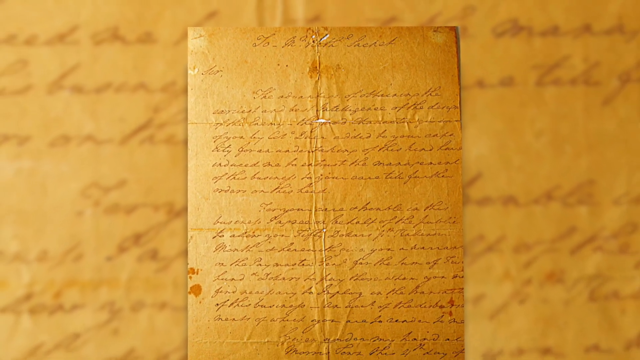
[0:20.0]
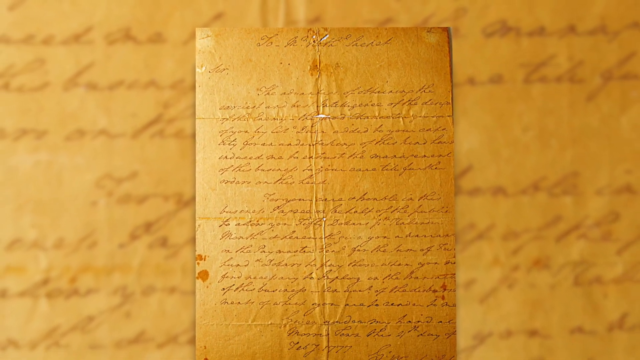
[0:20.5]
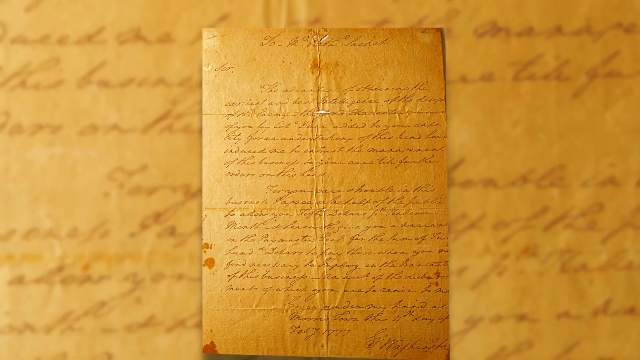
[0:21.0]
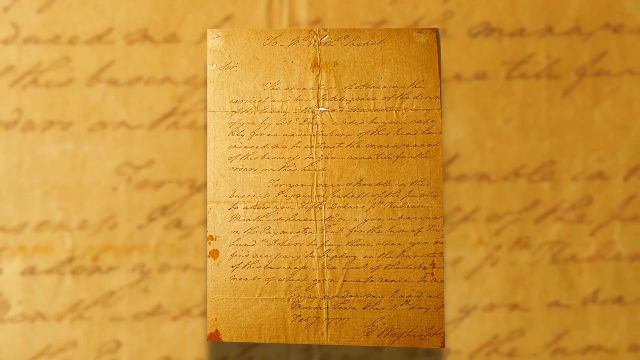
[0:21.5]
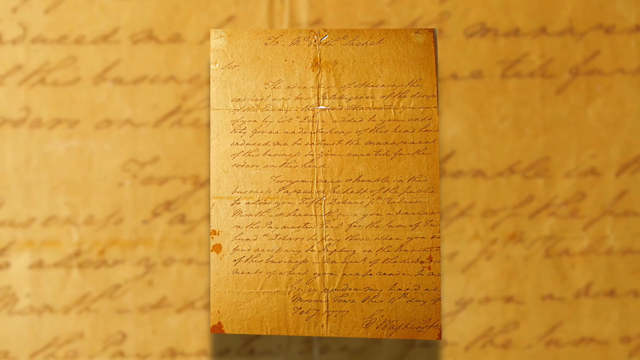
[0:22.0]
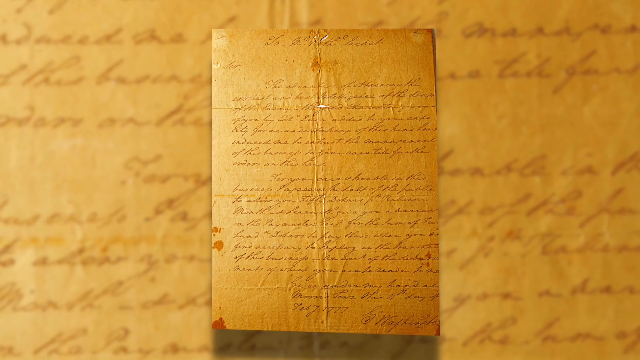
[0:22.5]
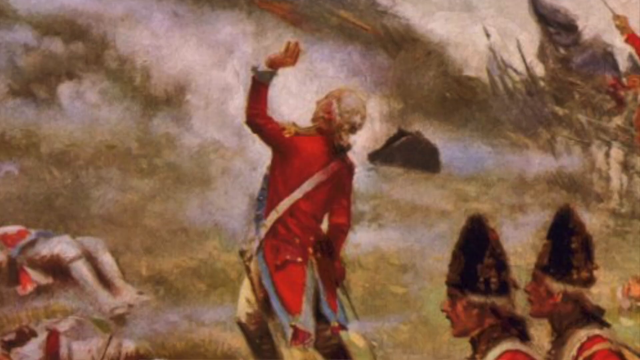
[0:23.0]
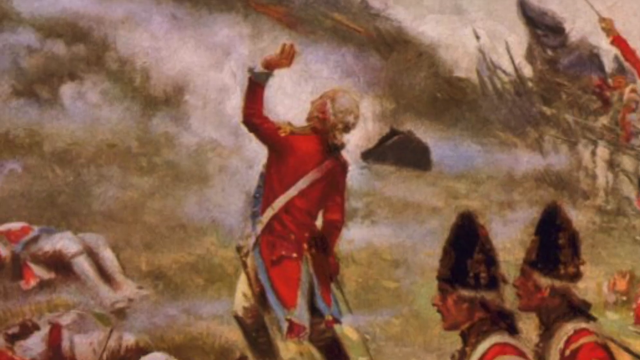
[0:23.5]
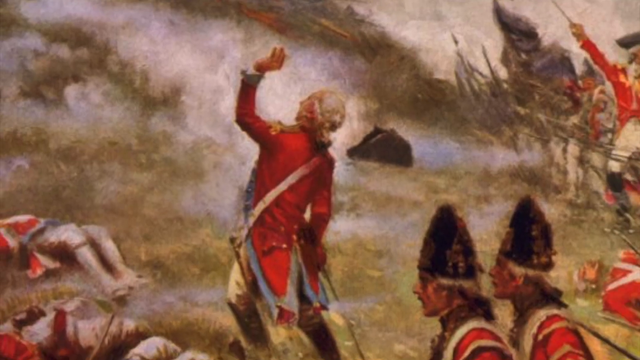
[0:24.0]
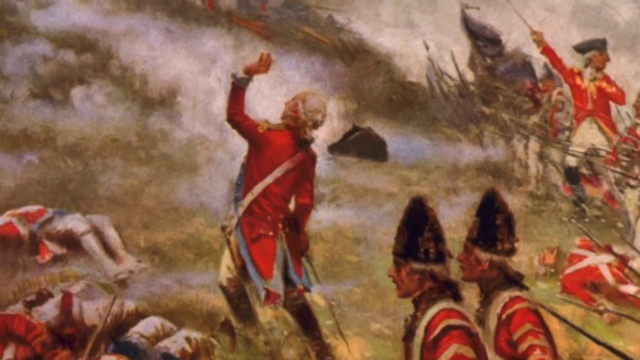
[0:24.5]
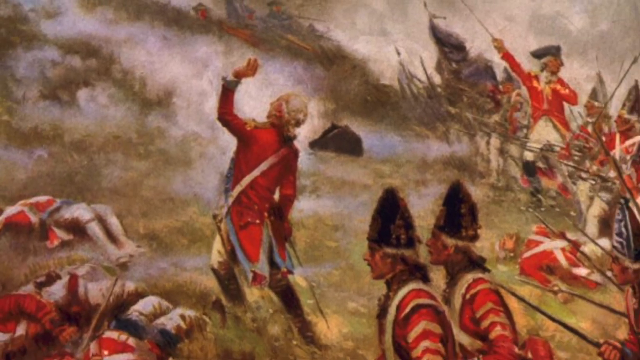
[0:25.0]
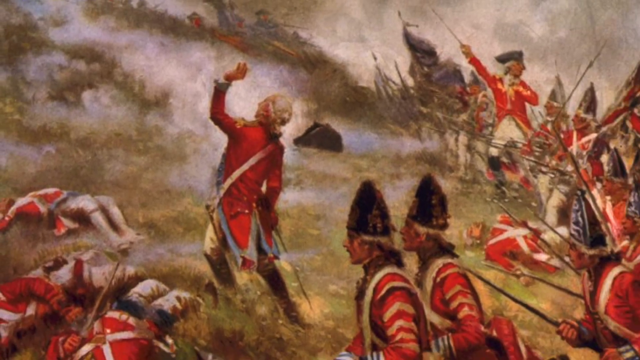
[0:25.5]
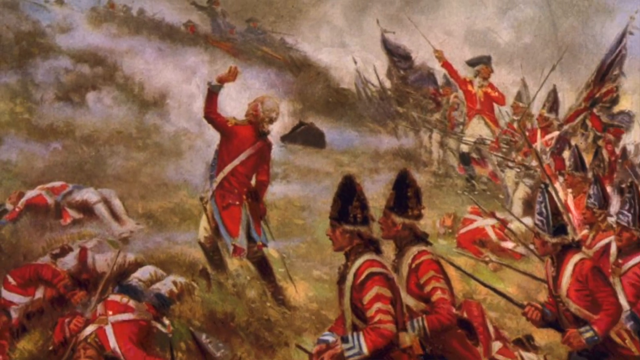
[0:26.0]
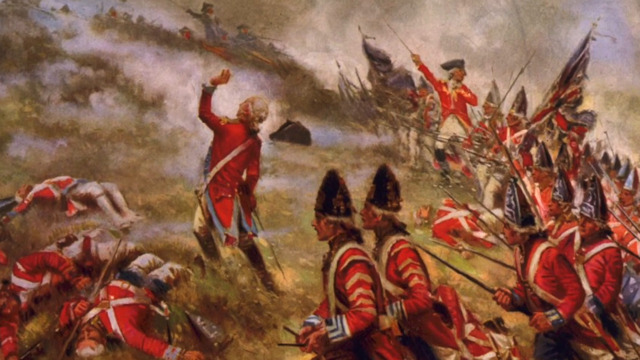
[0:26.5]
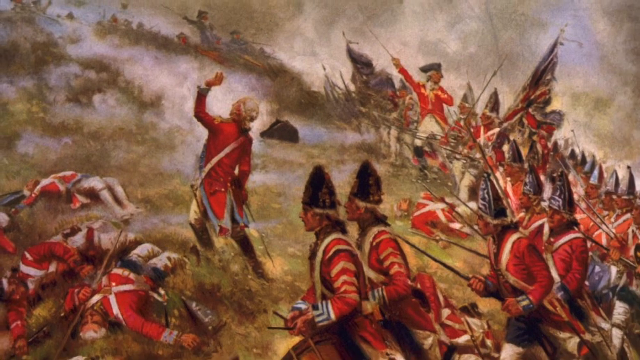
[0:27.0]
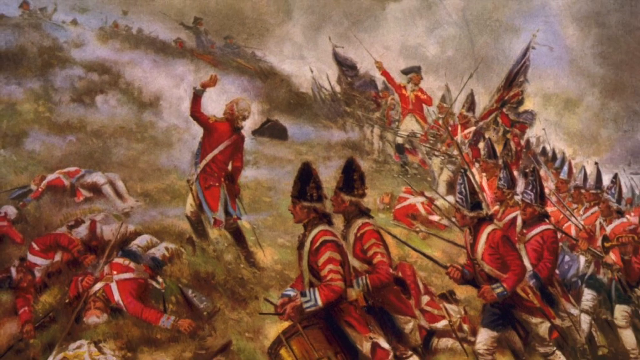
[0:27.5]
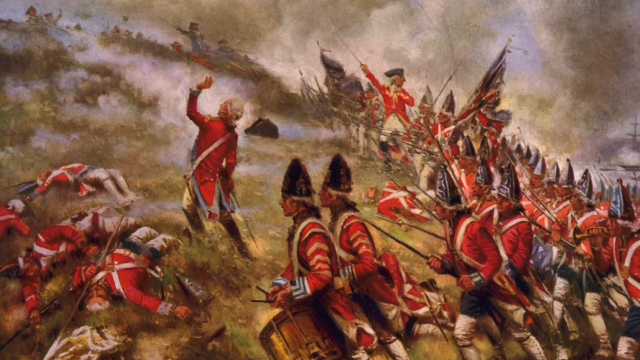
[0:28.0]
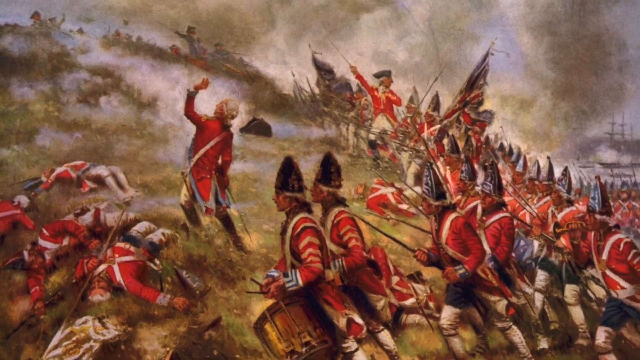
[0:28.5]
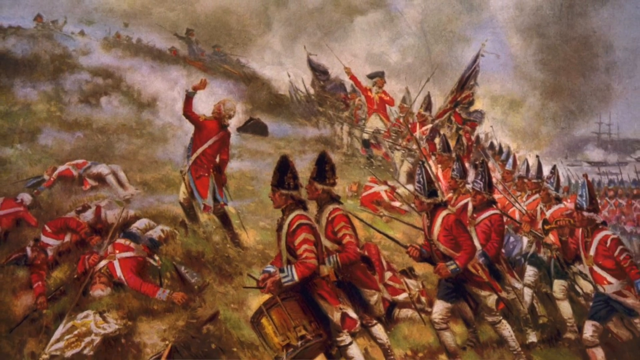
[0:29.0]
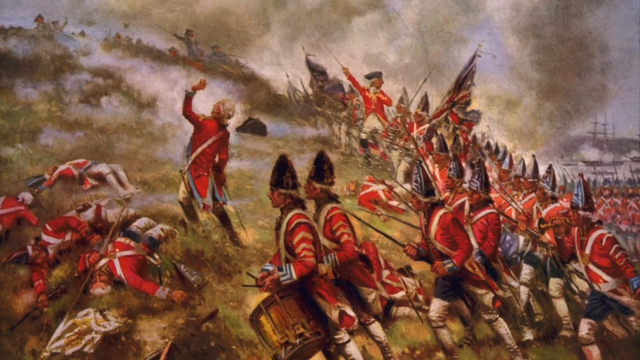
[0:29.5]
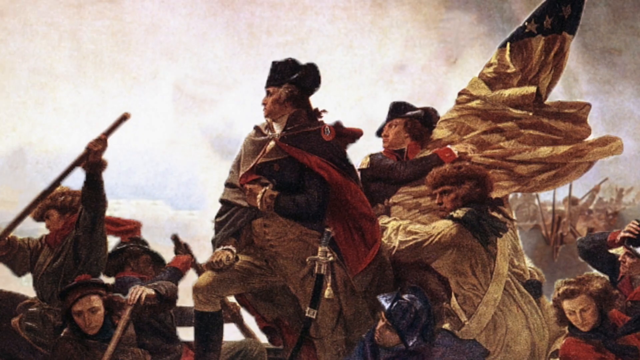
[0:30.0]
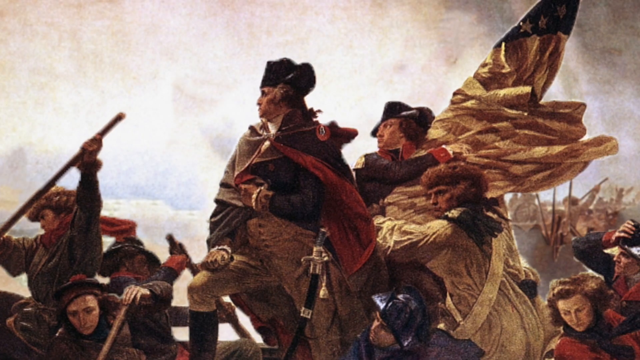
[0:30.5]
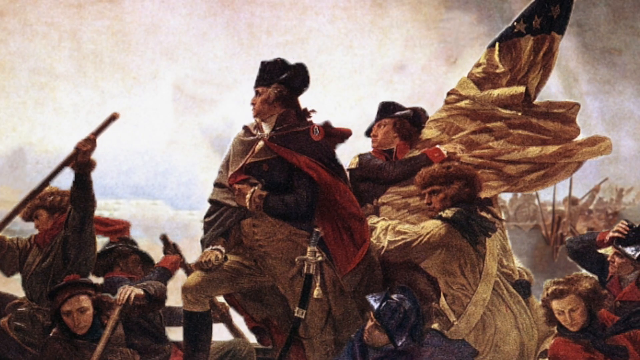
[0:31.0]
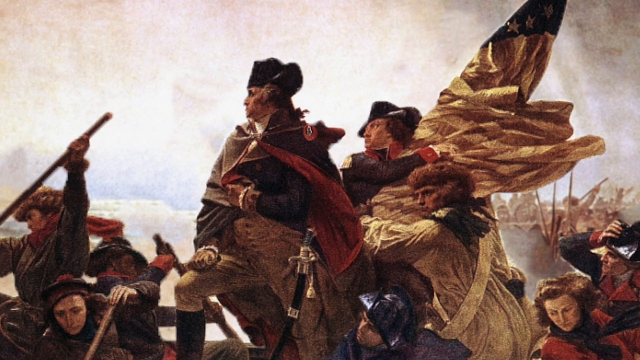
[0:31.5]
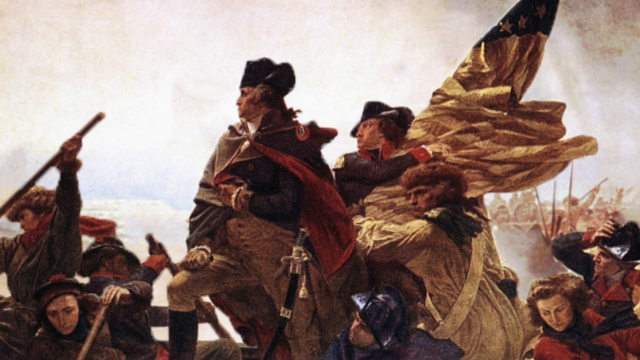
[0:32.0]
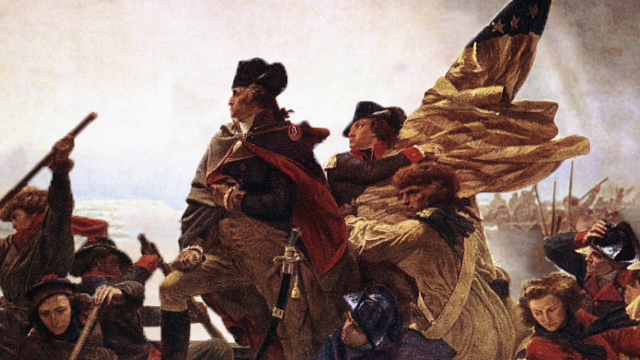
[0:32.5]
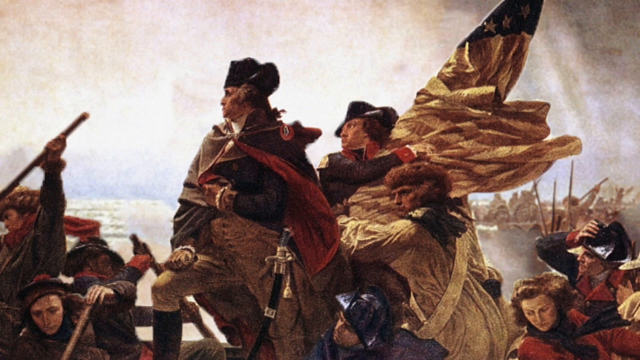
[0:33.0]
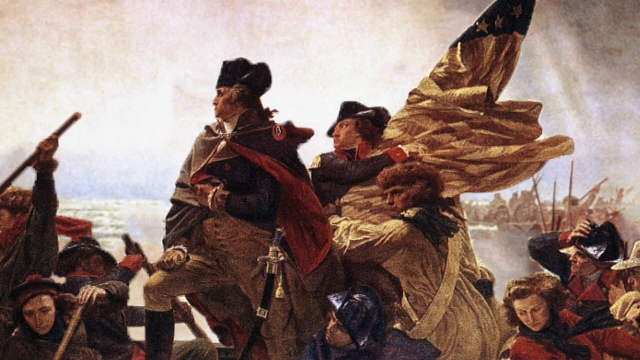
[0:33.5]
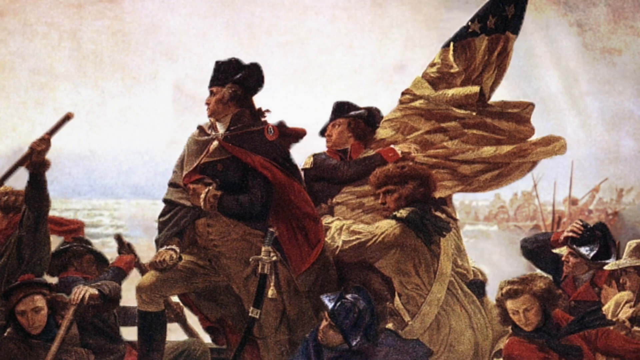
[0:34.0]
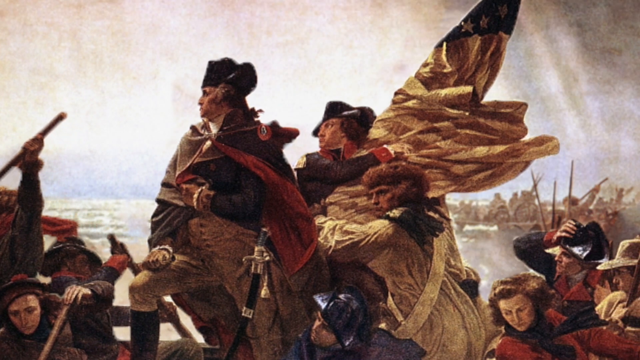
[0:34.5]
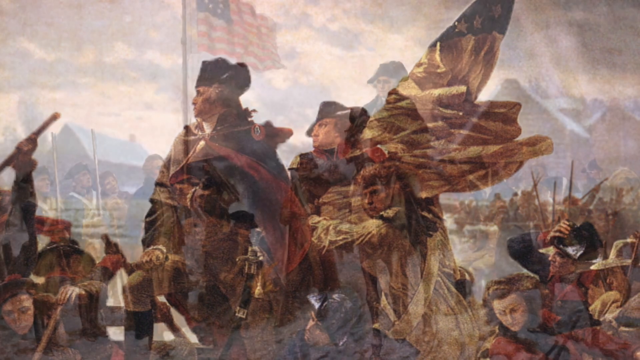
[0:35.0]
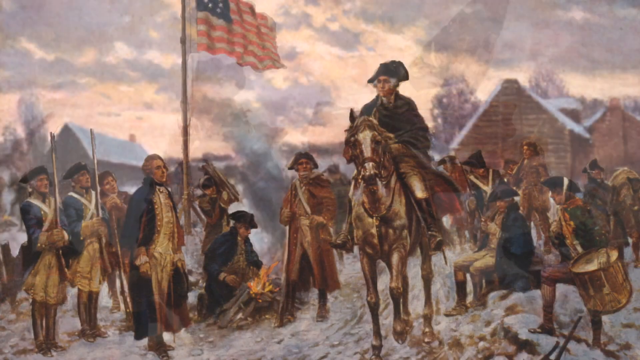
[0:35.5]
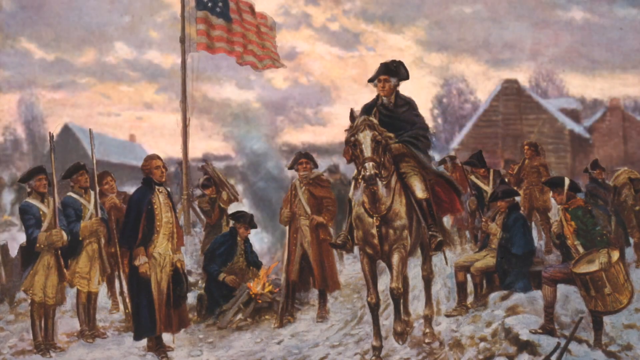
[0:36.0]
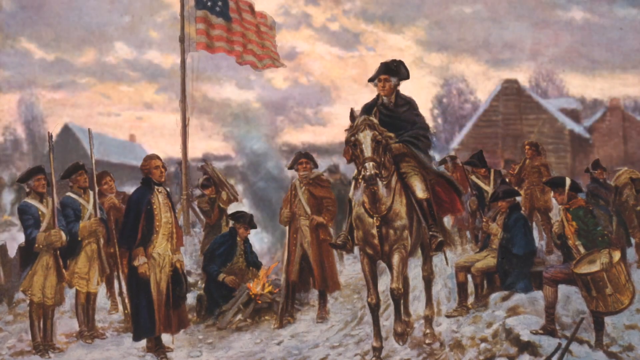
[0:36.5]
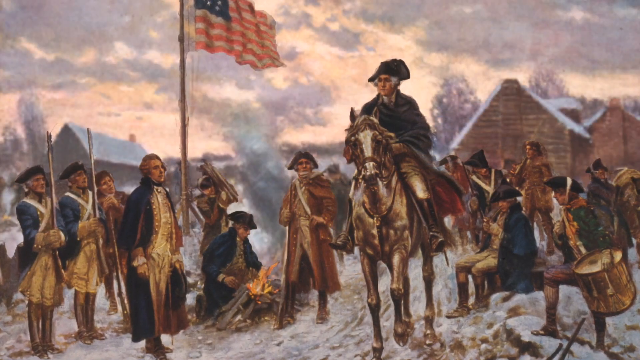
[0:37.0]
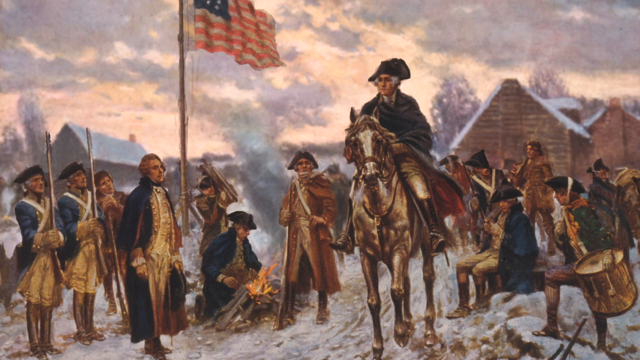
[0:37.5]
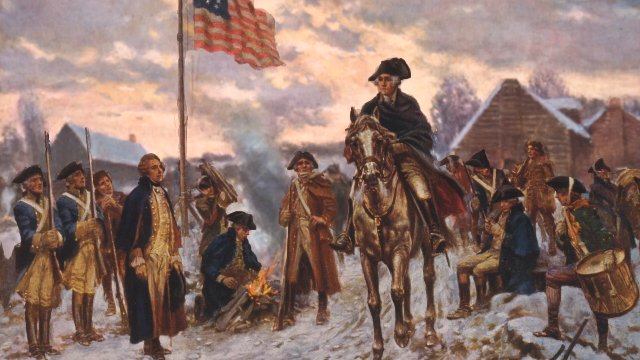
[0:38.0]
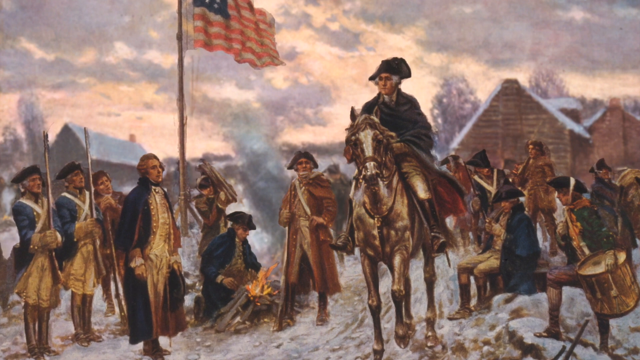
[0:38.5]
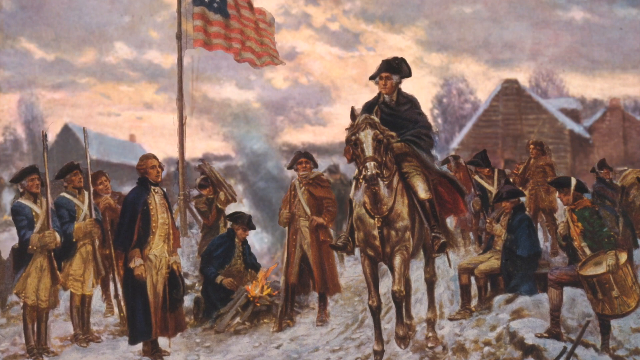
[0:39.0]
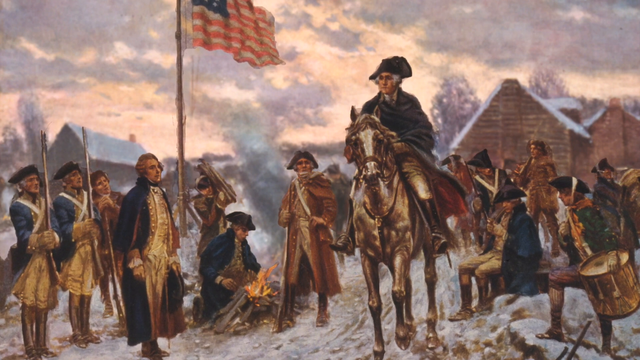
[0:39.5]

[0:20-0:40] A photograph of a handwritten letter on an aged piece of paper that has yellowed with time is shown. There are various stains on the paper and creases where it was folded; the creases show heavy wear, and some even show holes. The camera continues panning outwards on the handwritten letter. It then cuts to a painting of soldiers fighting in what seem to be 1700s uniforms, specifically British troops wearing their red coats. In the foreground, a man holds his hand up as if motioning the soldiers behind him to go forth. Multiple soldiers are downed on a hill. To the right of the painting, an officer in a tricorn hat points his sword upwards with his right hand, motioning for multiple soldiers with conical hats to charge up a hill where they are being shot down by soldiers in blue coats hiding behind various barricades.